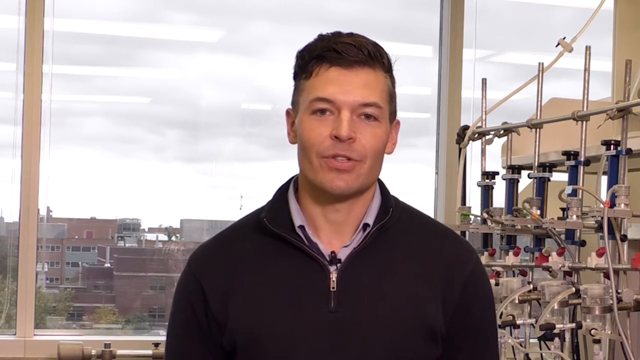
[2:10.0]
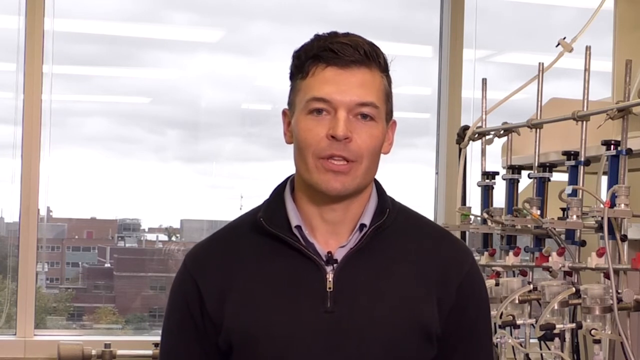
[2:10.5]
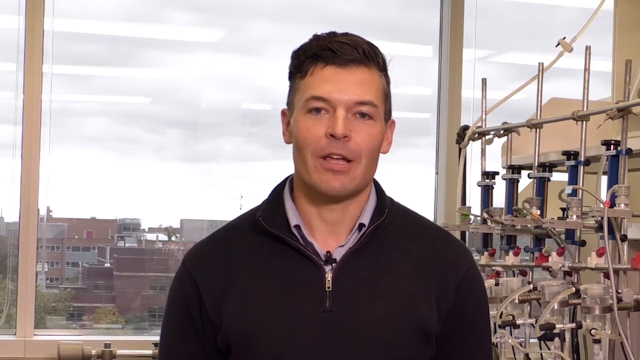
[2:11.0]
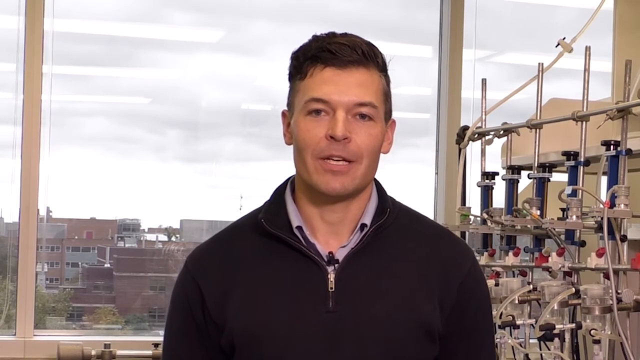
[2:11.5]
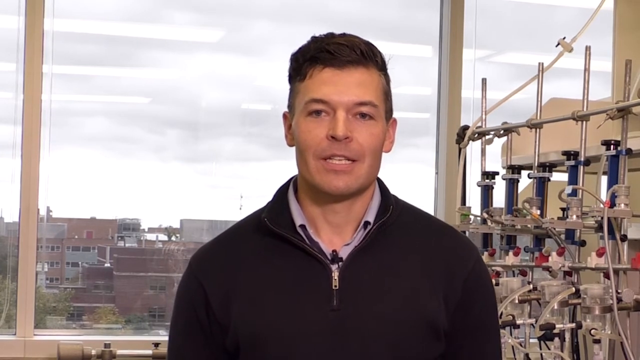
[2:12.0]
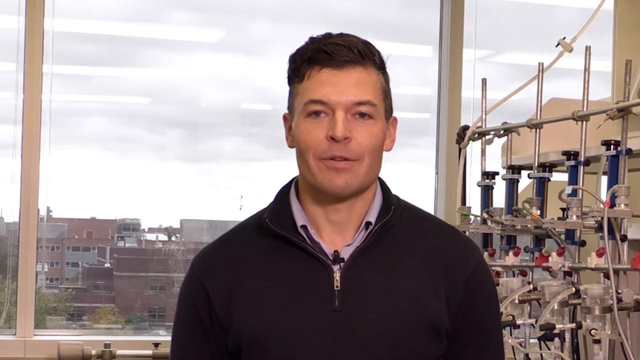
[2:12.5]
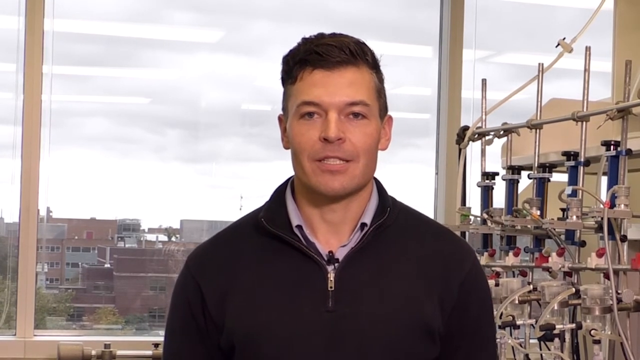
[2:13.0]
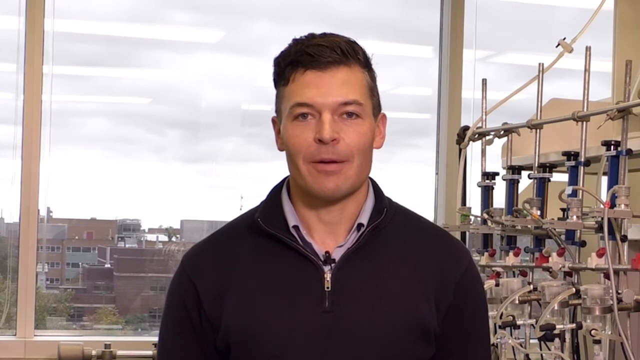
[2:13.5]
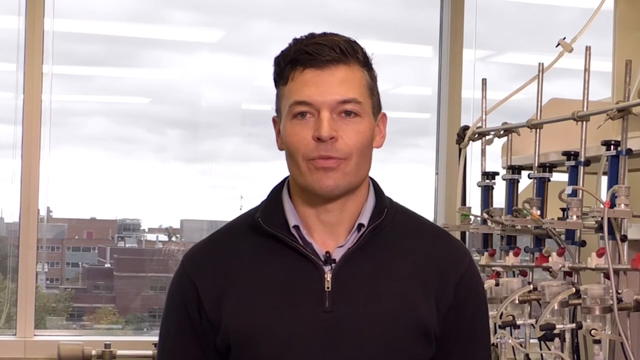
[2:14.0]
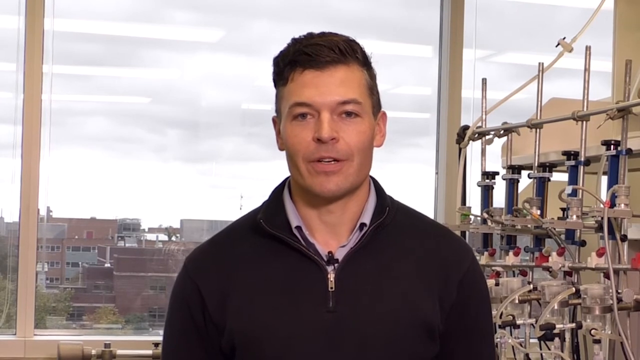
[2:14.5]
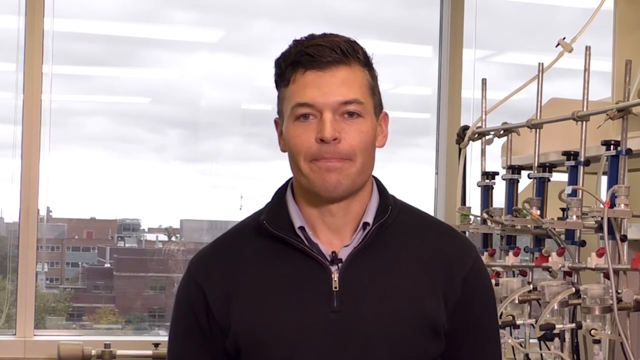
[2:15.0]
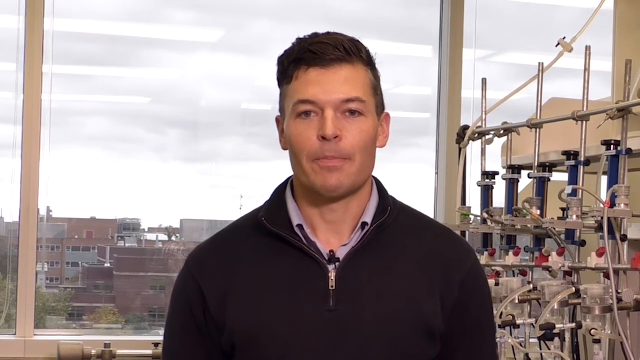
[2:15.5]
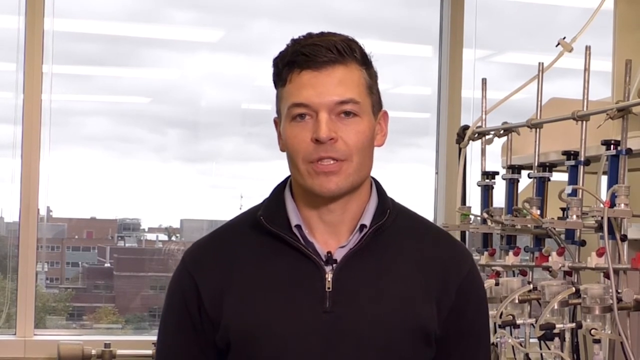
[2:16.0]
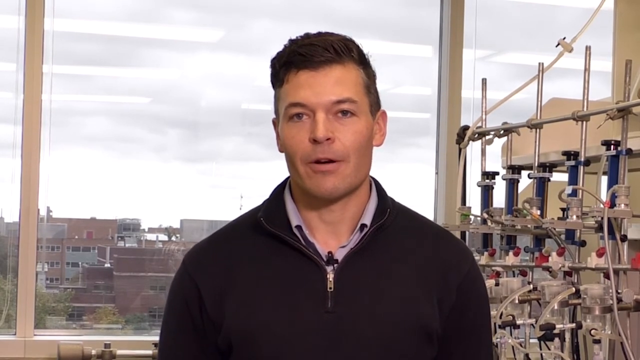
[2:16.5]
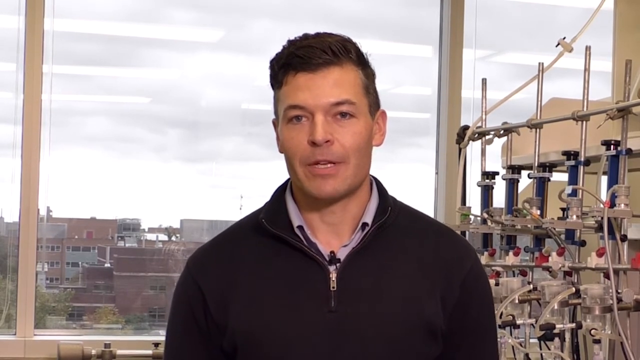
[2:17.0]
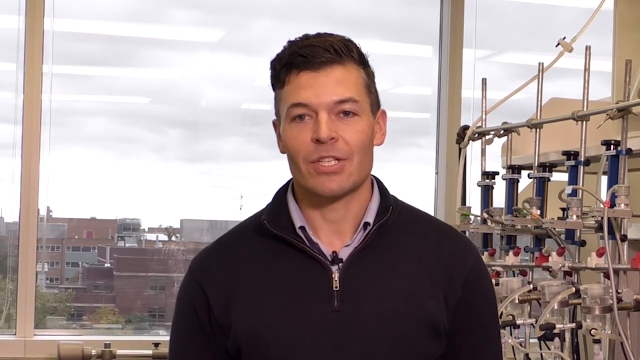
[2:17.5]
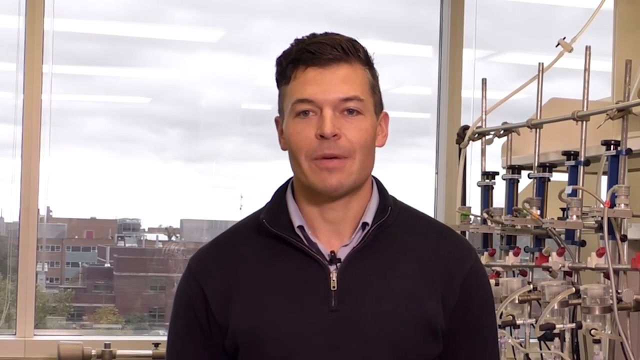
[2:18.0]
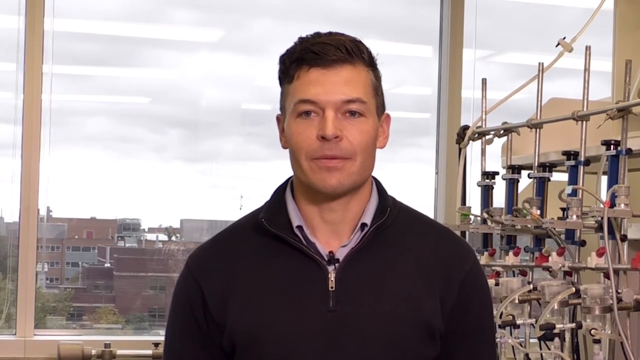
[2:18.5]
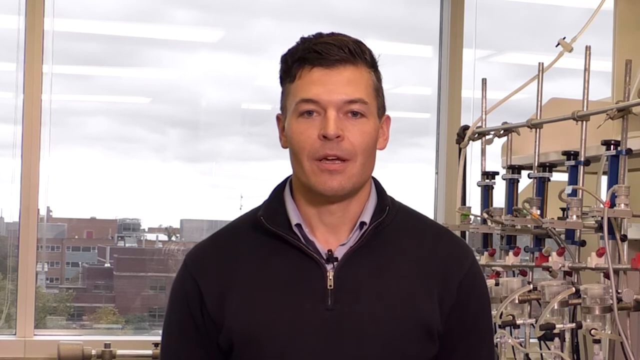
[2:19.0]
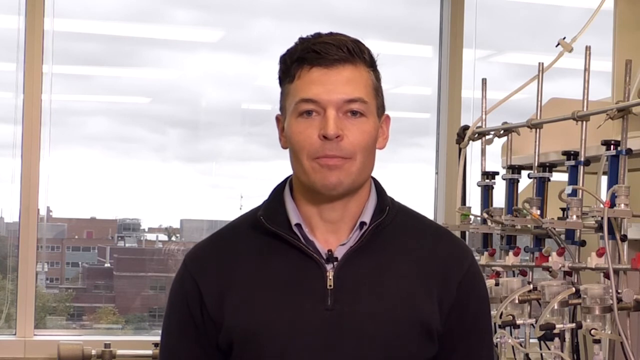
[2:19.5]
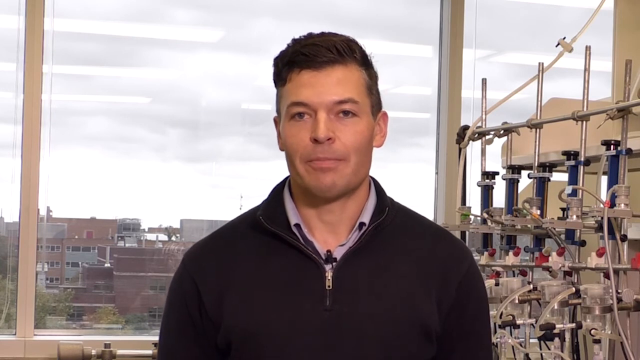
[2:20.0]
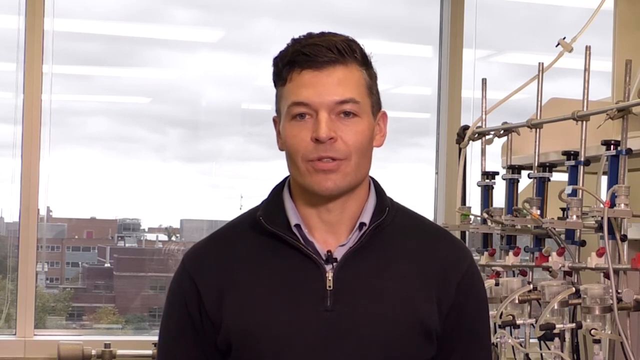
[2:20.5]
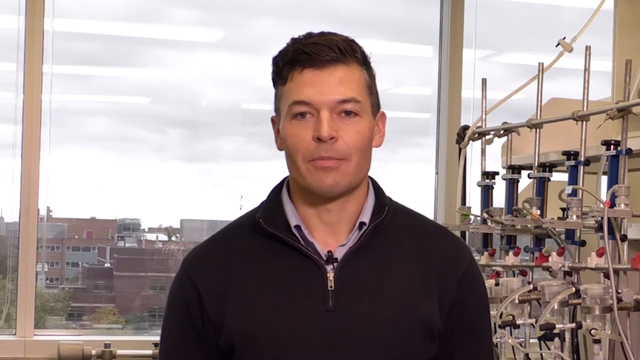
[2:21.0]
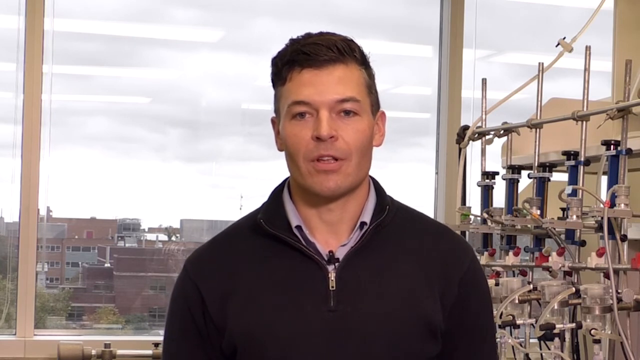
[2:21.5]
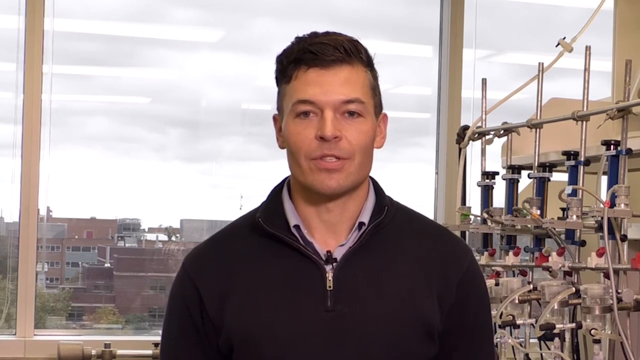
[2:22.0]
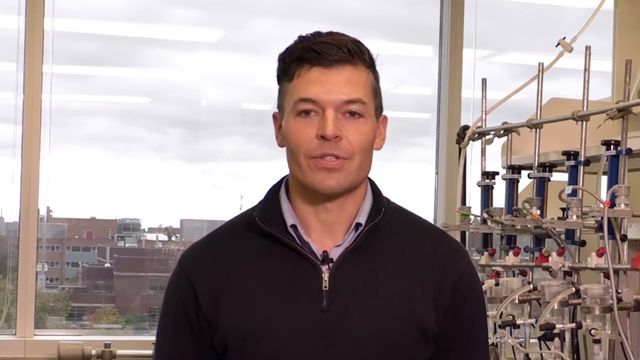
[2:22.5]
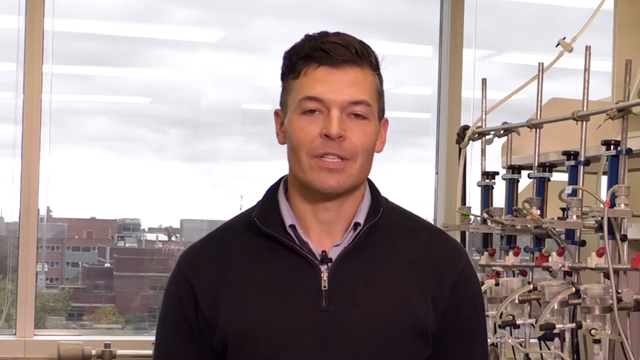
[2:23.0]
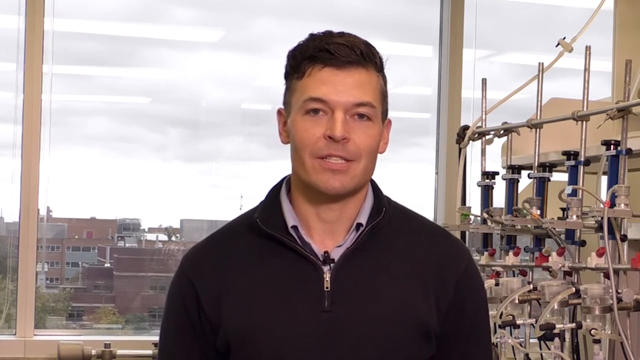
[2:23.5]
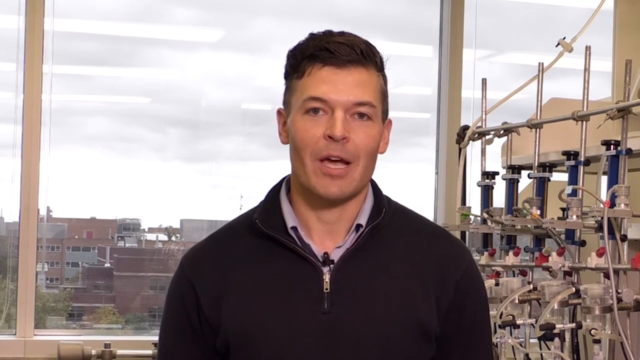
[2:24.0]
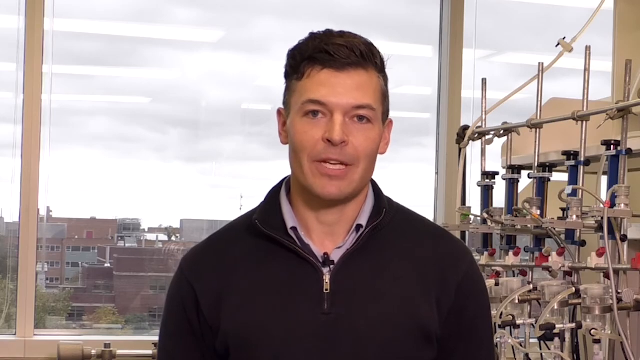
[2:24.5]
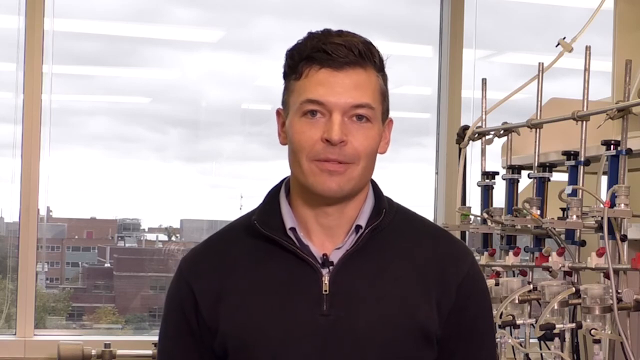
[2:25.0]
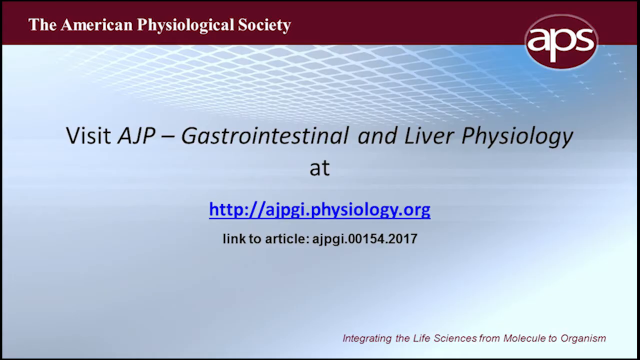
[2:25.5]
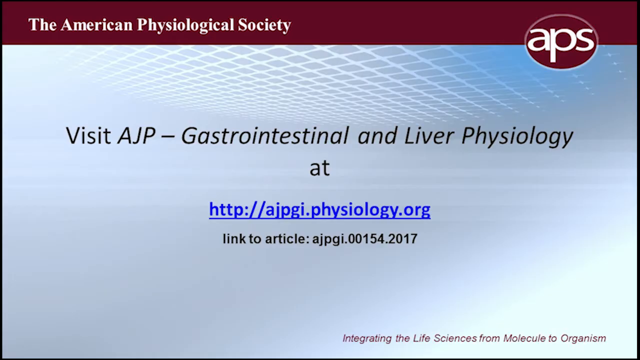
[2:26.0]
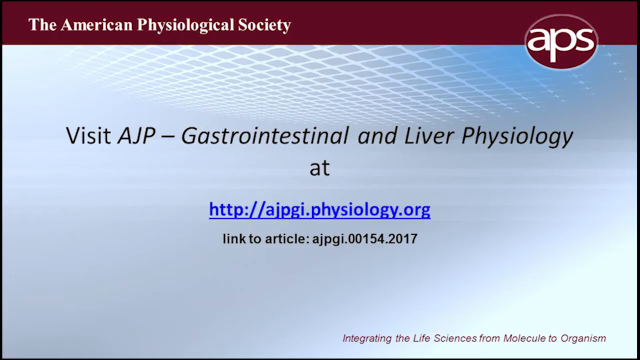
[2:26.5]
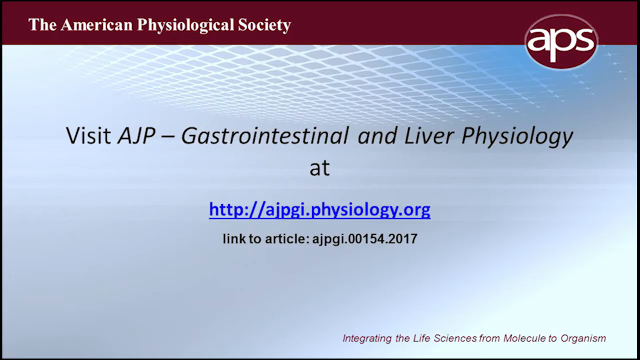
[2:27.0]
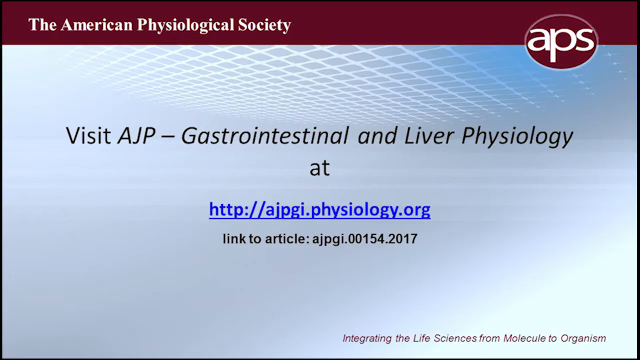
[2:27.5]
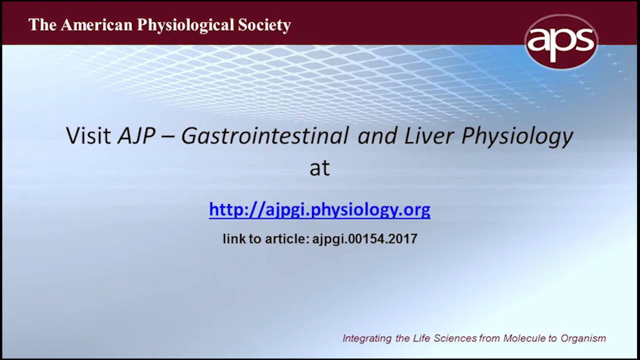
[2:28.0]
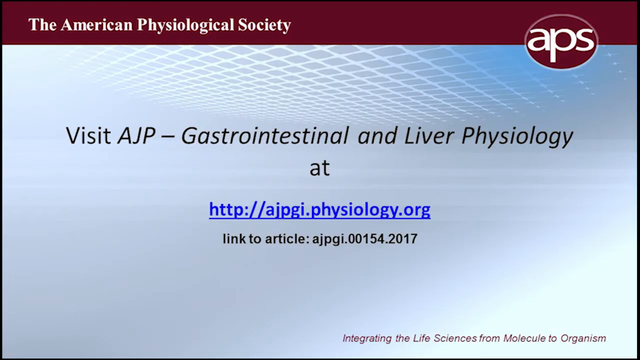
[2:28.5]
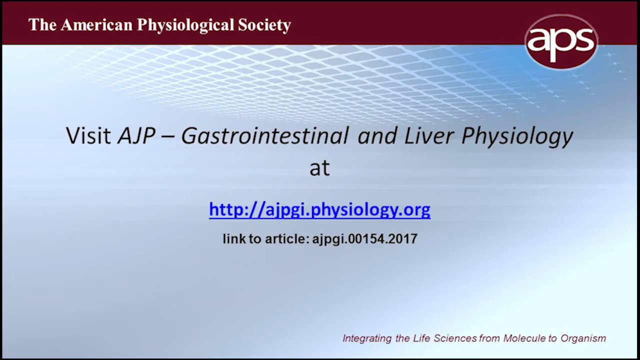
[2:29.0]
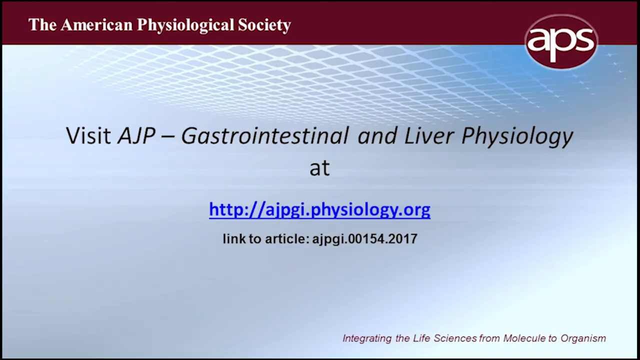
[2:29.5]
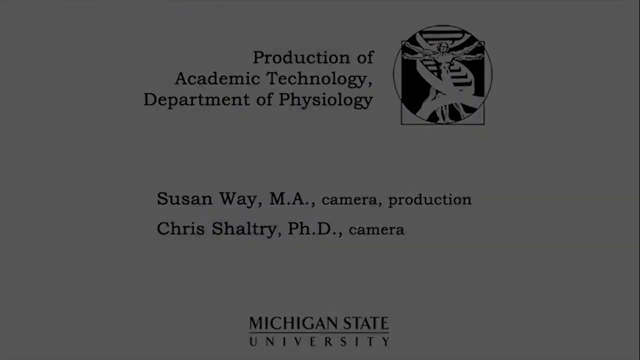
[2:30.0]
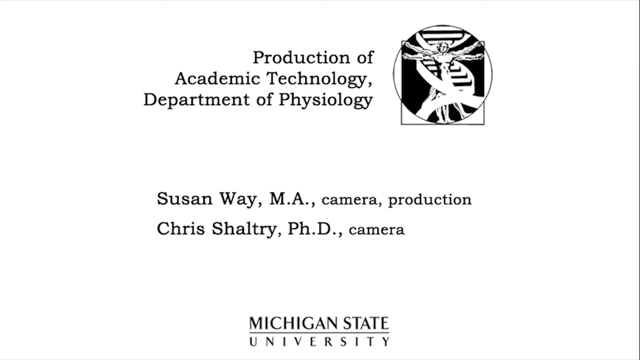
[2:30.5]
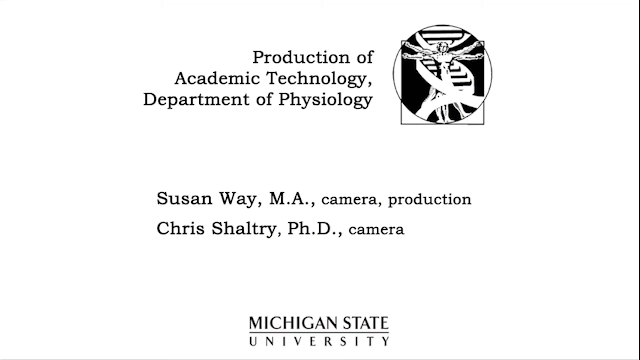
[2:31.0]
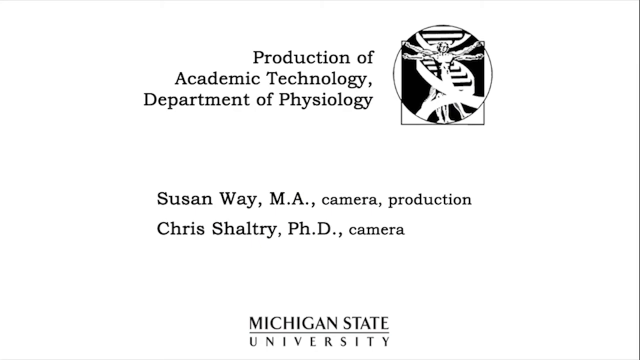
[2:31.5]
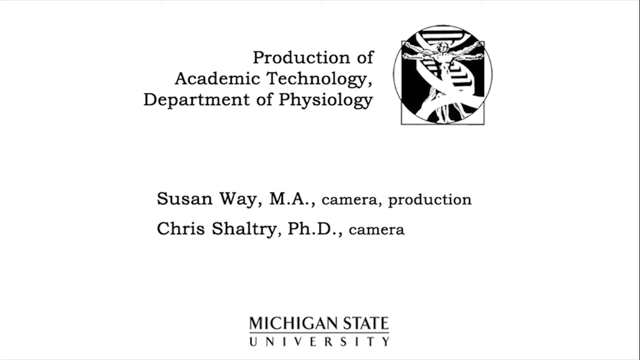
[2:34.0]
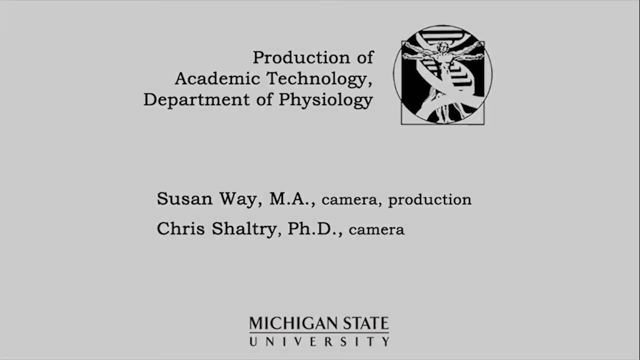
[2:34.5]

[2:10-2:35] A man talks directly to the camera. He wears a black jumper with a zip over a white shirt and has short black hair, and he is standing next to a large amount of medical equipment with tubes and metallic pipes. Behind him, a large window shows that he is quite high up, with many buildings next to him. A graphic from the American Physiological Society, or APS, then says "visit AJP, Gastrointestinal and Liver Physiology at http://agpgi.physiology.org" and gives a link to the article. The graphic switches to "Production of Academic Technology, Department of Physiology," crediting Susan Way for camera and production and Chris Sheltry, PhD, also on camera; it seems to involve Michigan State University, which helped produce the video.